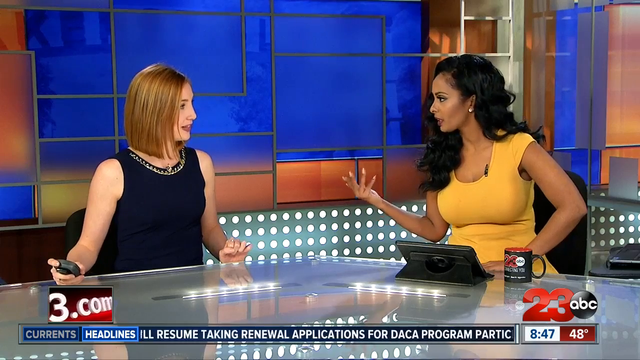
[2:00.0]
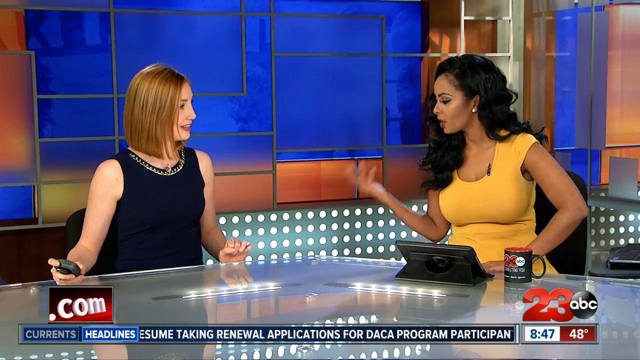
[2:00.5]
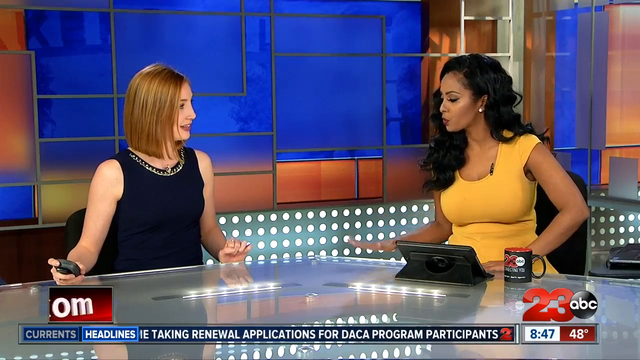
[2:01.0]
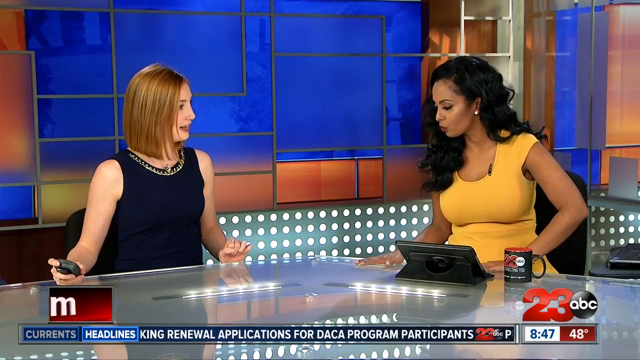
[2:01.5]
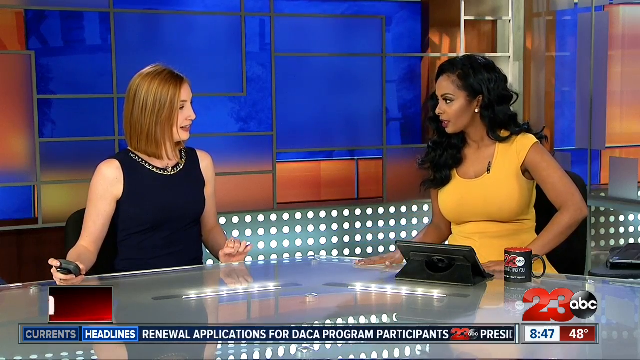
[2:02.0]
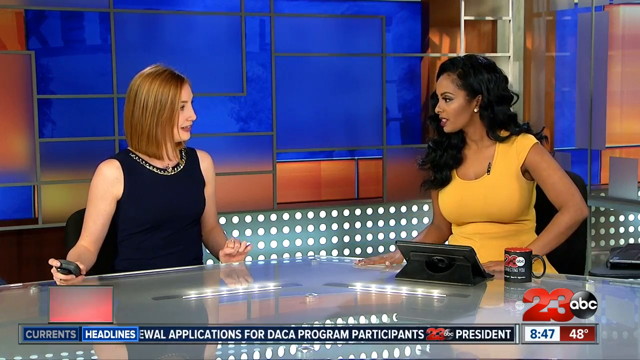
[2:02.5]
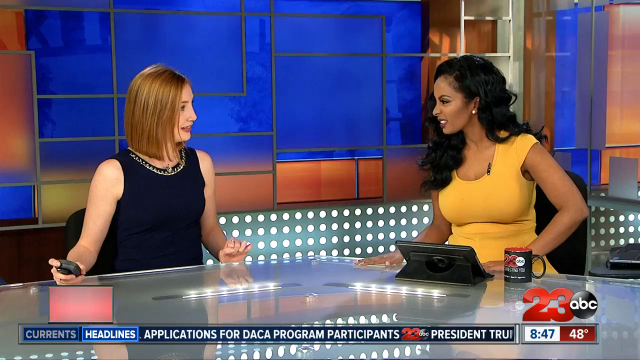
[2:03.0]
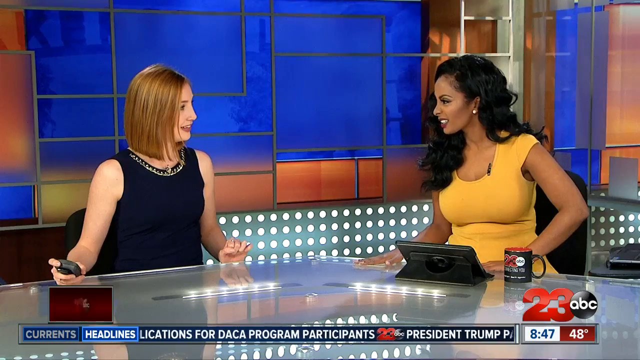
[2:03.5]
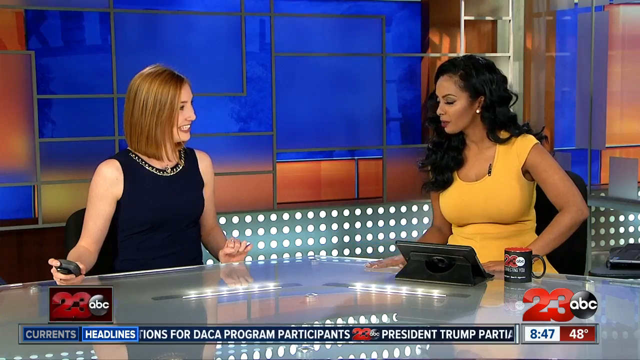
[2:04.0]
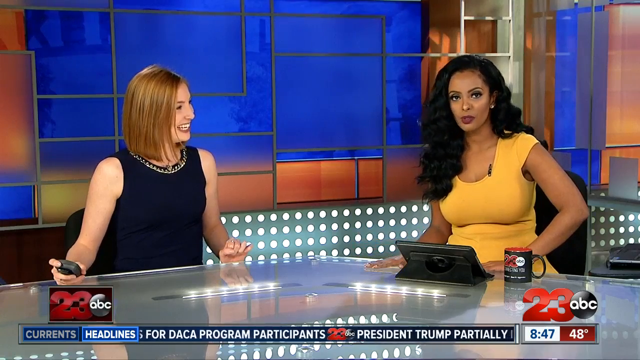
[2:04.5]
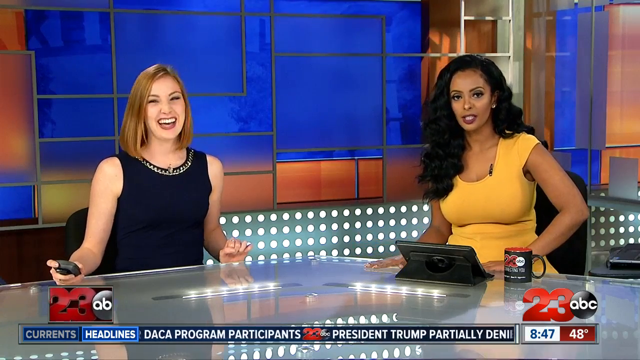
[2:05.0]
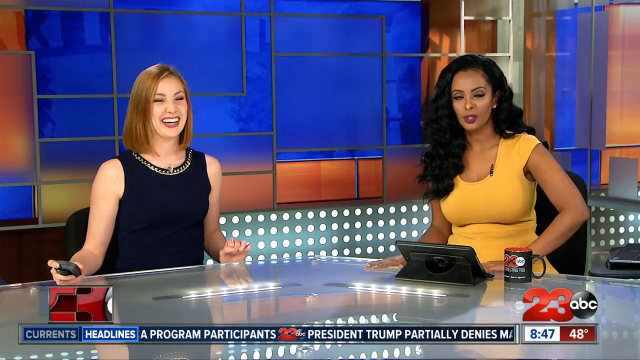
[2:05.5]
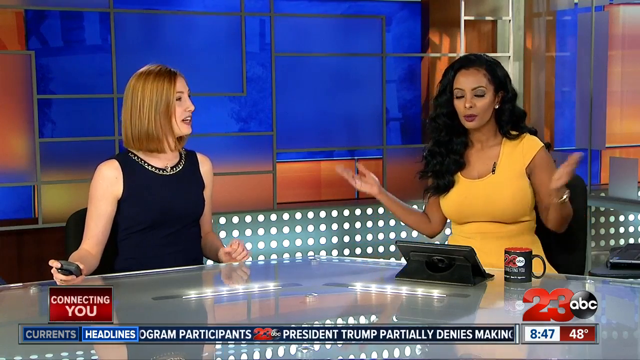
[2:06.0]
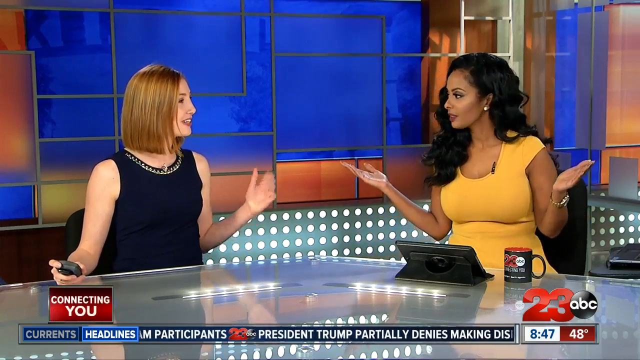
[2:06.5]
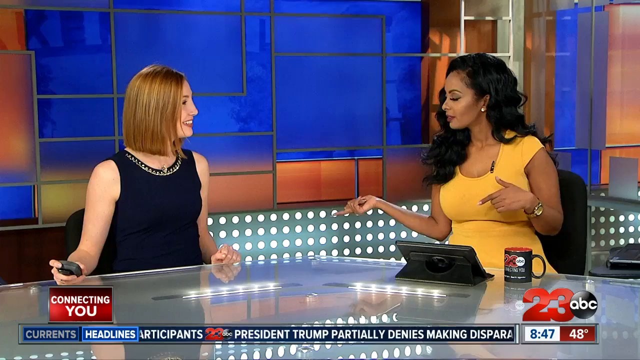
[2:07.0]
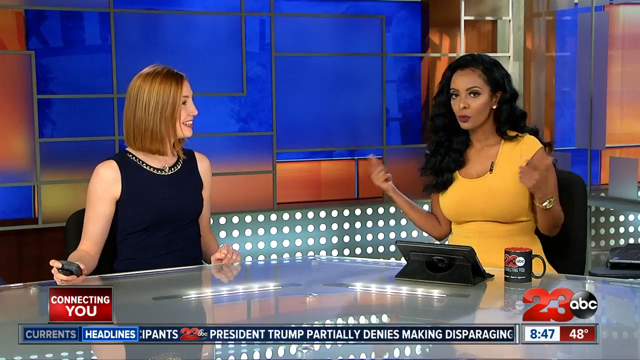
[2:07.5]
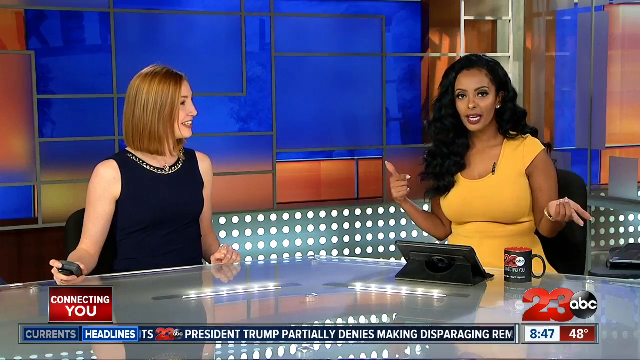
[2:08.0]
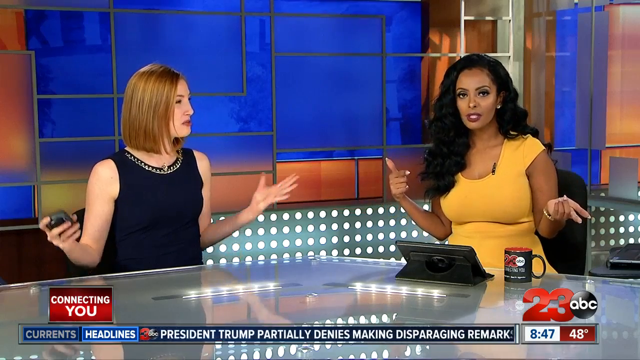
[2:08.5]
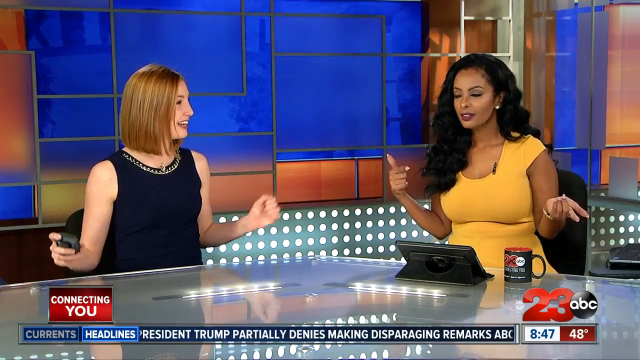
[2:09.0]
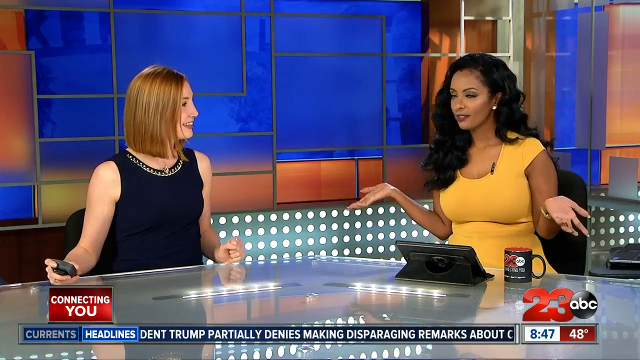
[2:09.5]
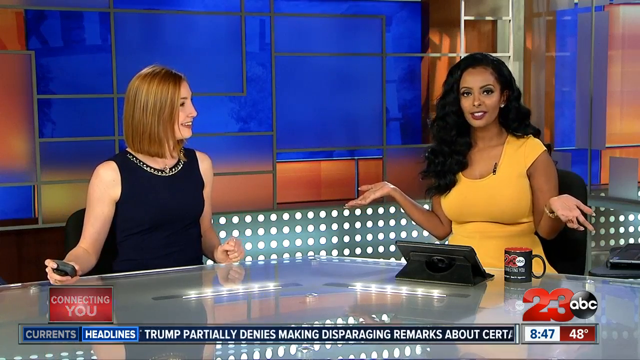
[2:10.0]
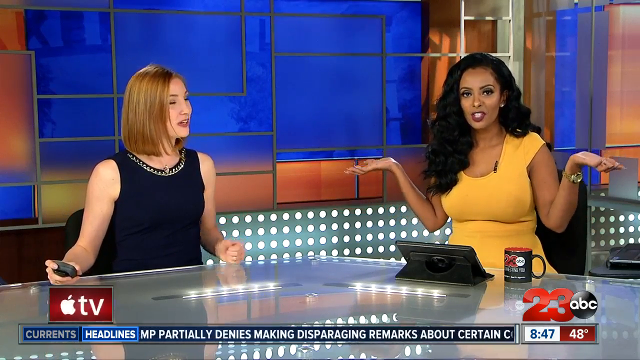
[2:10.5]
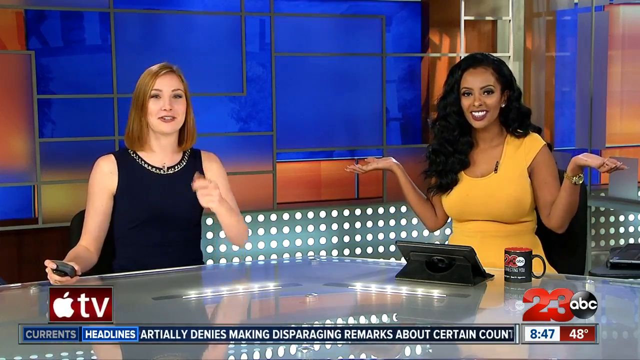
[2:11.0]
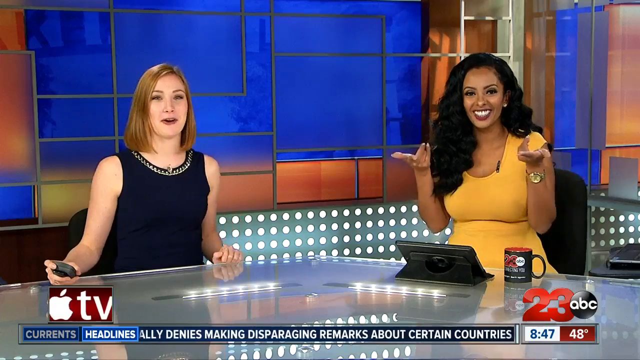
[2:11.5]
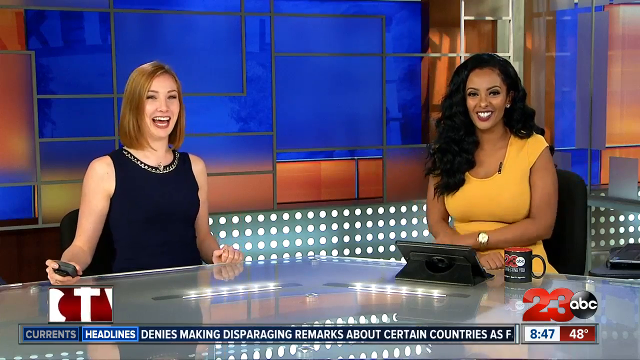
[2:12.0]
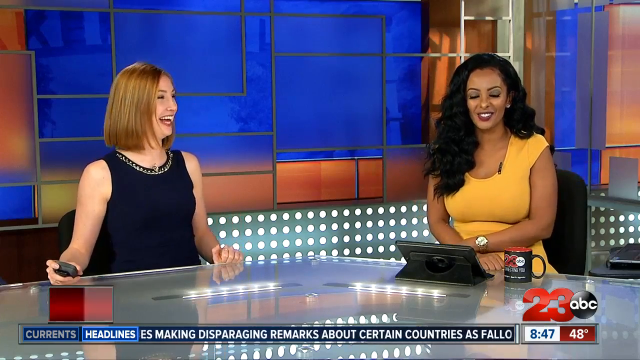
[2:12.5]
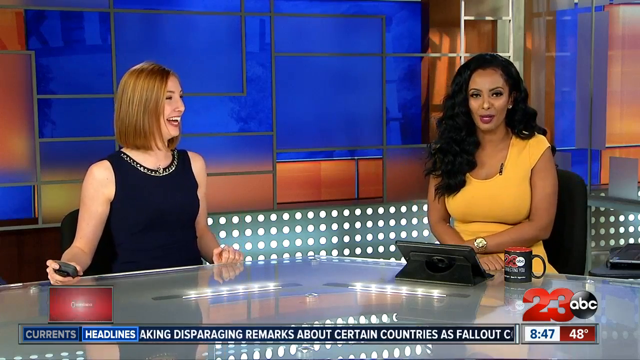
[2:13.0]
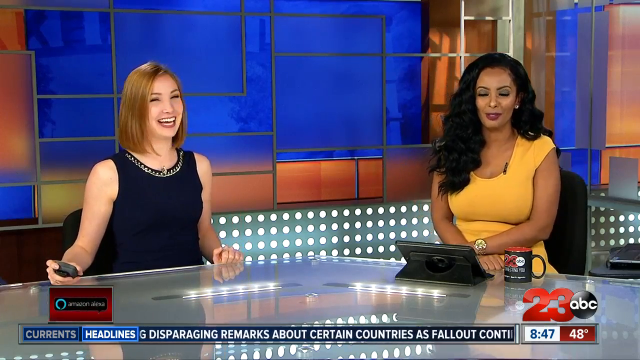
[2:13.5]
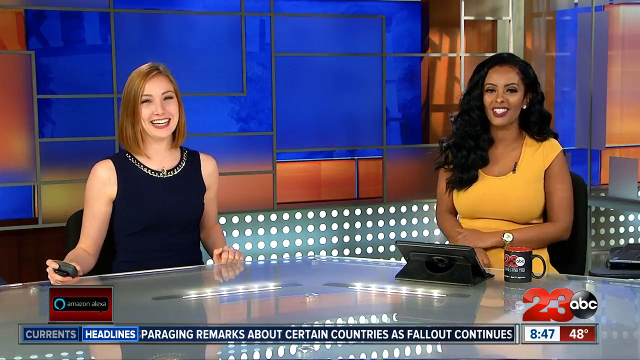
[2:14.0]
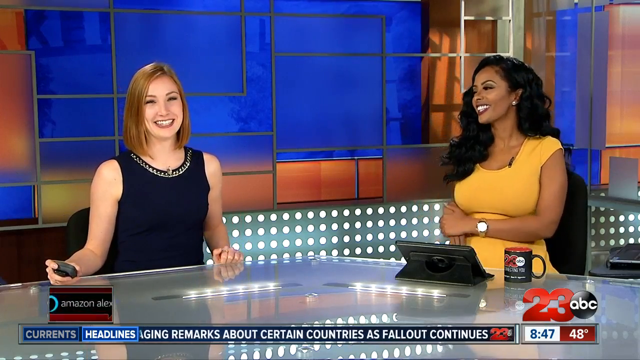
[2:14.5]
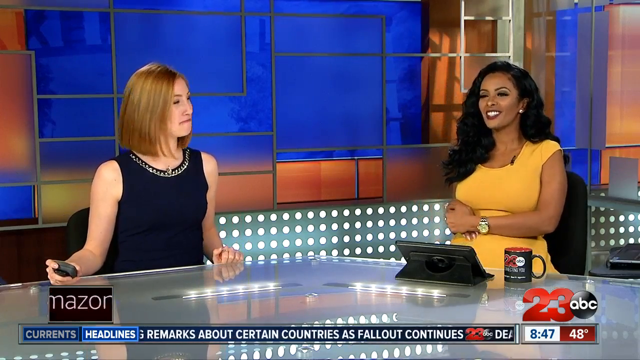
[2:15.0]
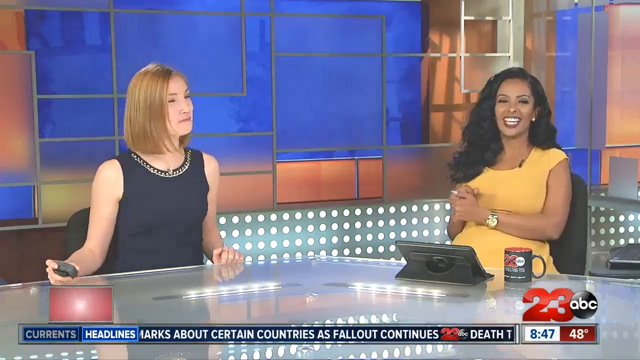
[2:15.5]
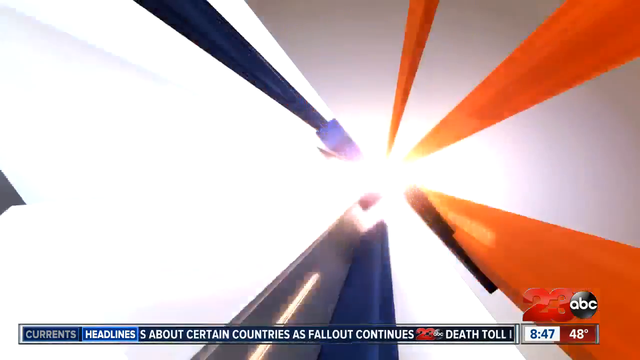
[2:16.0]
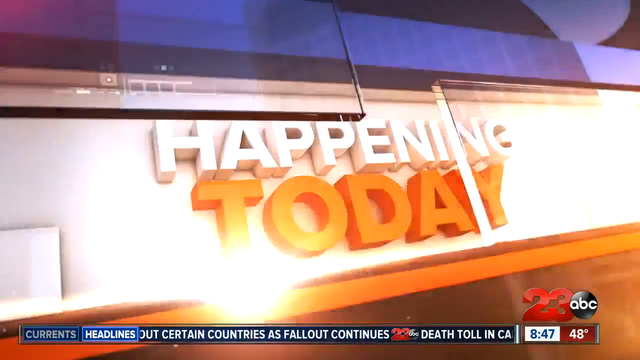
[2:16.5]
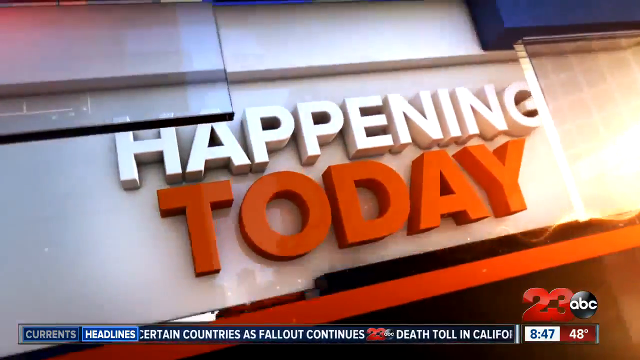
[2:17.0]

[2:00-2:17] The two women are seated in the studio. The woman in the mustard dress has a tablet in front of her and a cup of coffee, while the other is still holding the remote. An advert shows "happening today." The two women seem to be discussing the weather shown for various cities, from sunny to stormy, rainy, breezy and cool. The segment ends with the two women, one in the mustard dress and one in the navy dress, on the 23 ABC channel.